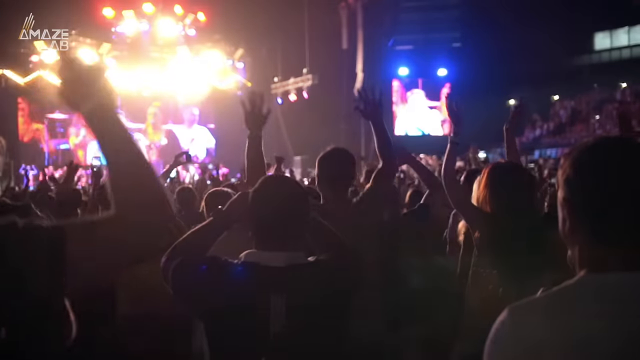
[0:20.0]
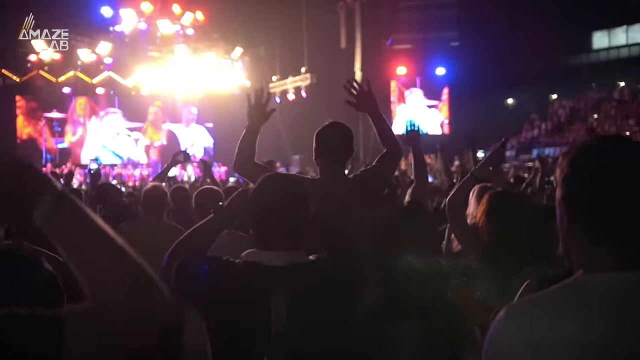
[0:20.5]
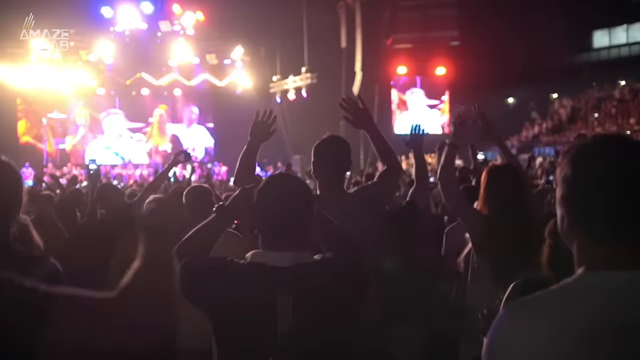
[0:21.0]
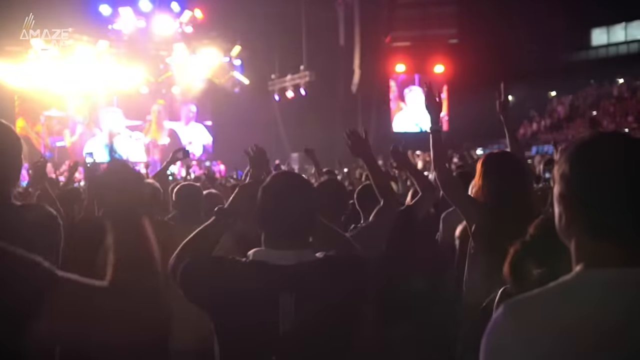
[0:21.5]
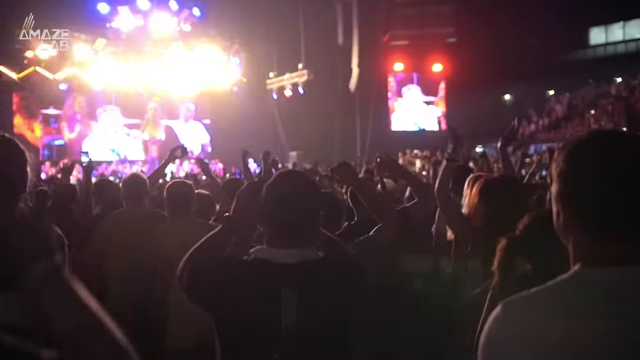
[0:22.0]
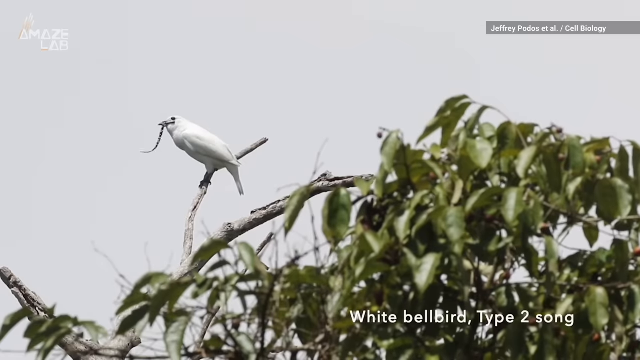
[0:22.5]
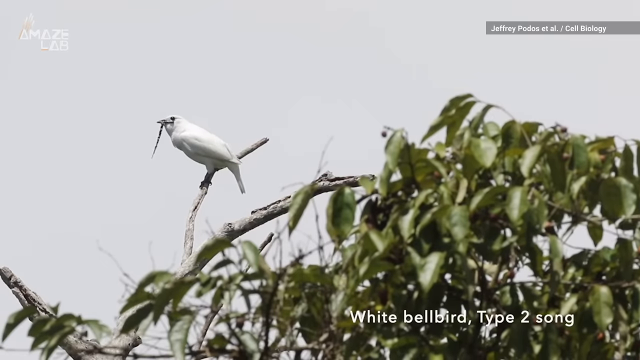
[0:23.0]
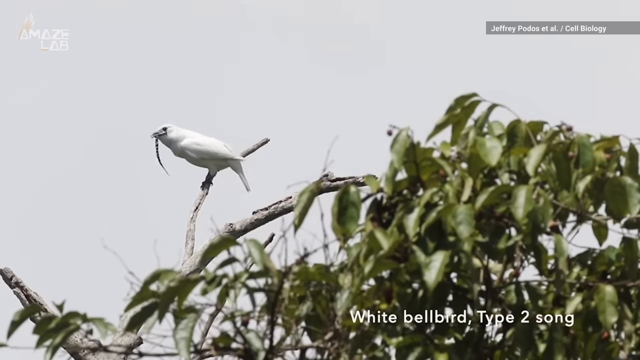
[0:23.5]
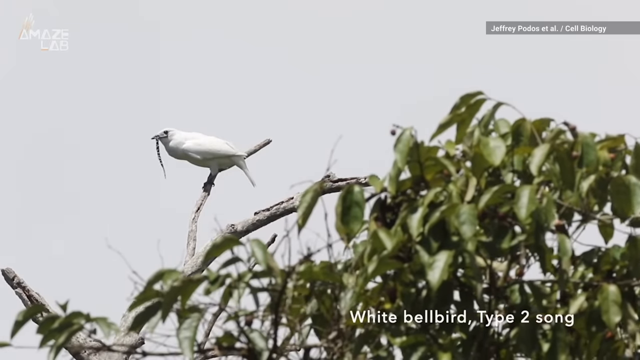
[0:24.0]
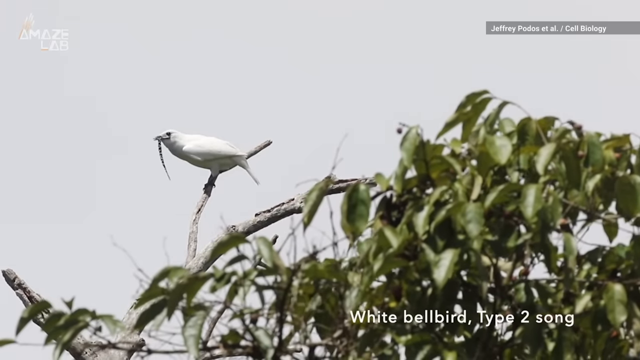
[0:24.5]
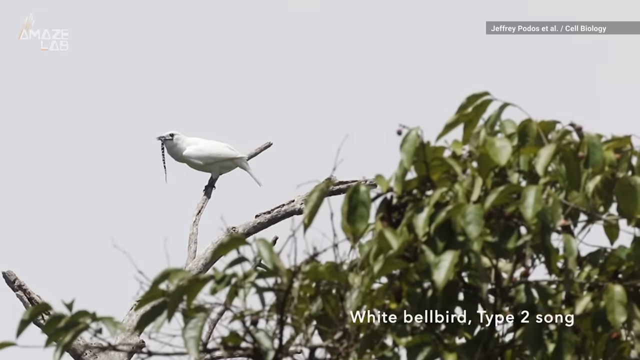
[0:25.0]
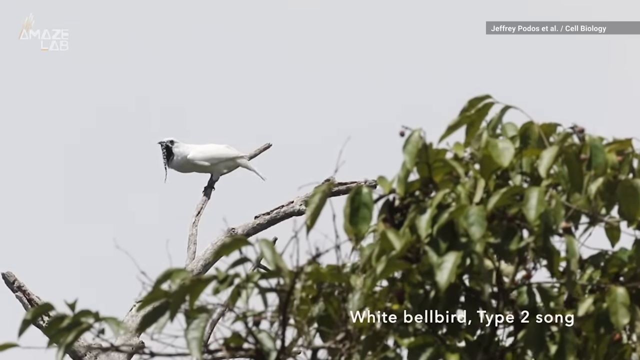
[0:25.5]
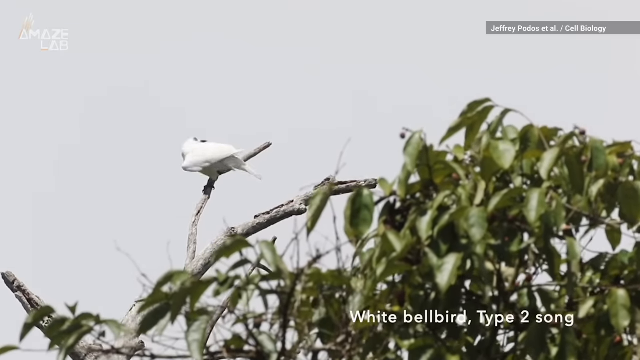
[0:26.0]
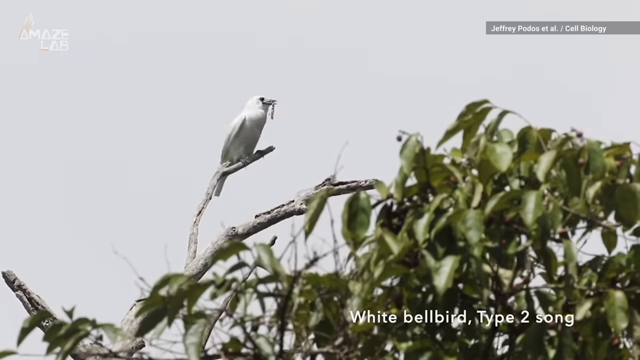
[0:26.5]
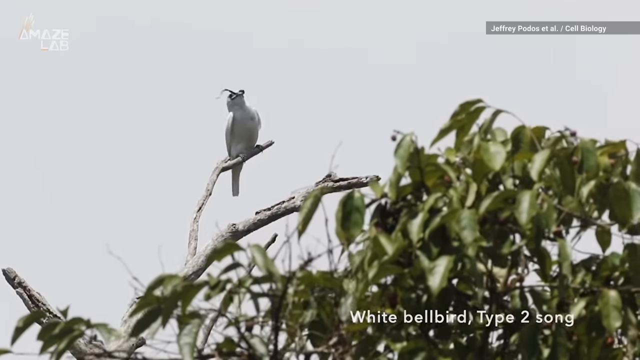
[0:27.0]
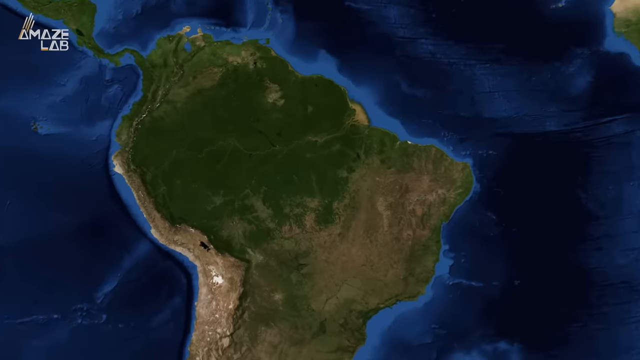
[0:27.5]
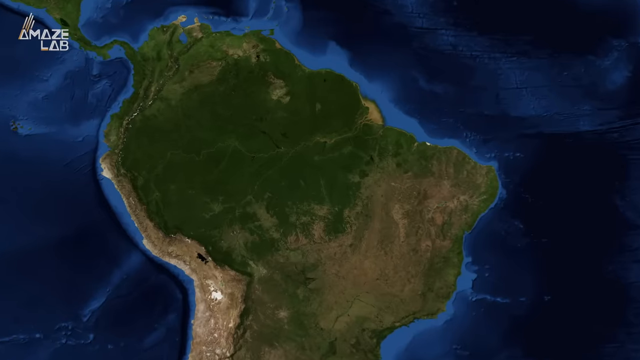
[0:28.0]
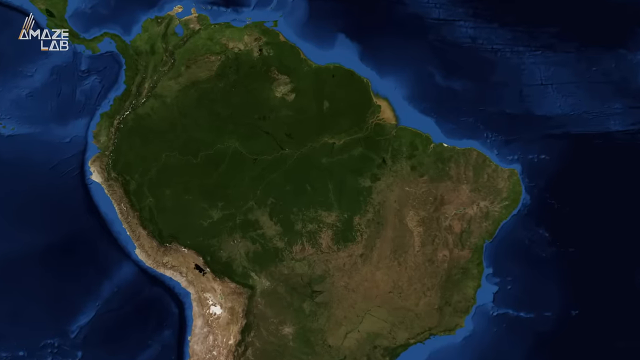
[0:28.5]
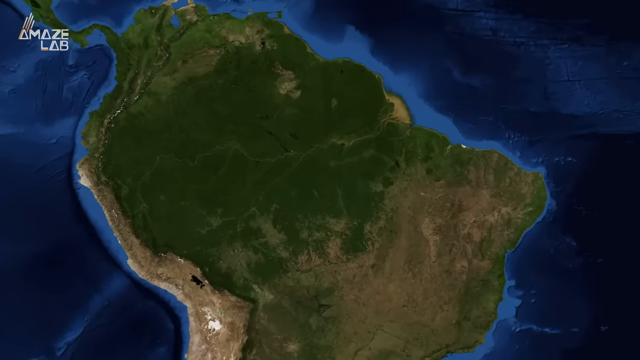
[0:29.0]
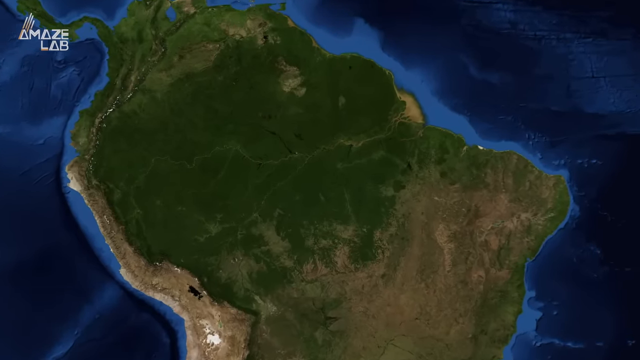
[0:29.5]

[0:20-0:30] A large crowd of men and women is seen from behind, facing the stage. There are two large screens, one at the top left and one at the top right, the top left one larger, and there appear to be three people on the screens. There are a lot of lights at the top left as well, orangish mixed with some blue. The crowd members jump up and down. The scene changes back to a bird sitting on a tree branch, looking to the left, with the text "White Bell Bird Type II song"; the bird moves around, opening its beak. The final scene is a sort of image of a large green land surrounded on all sides by a large body of very dark blue water.